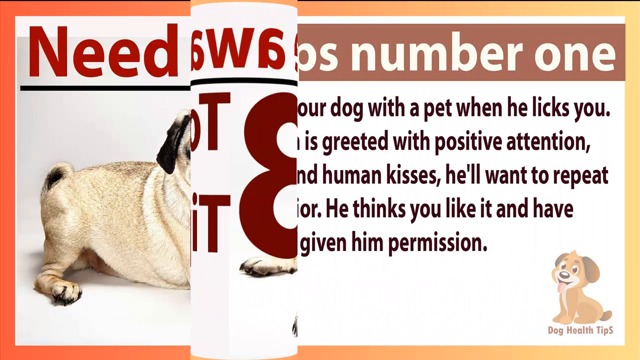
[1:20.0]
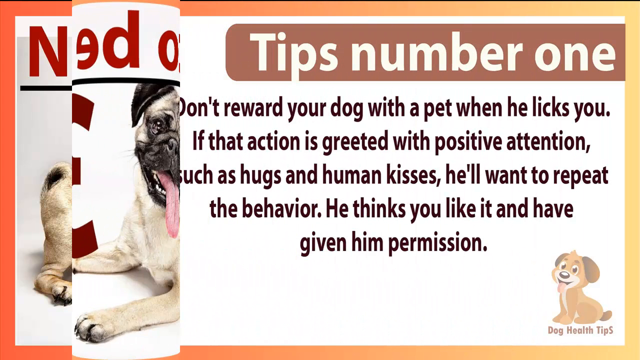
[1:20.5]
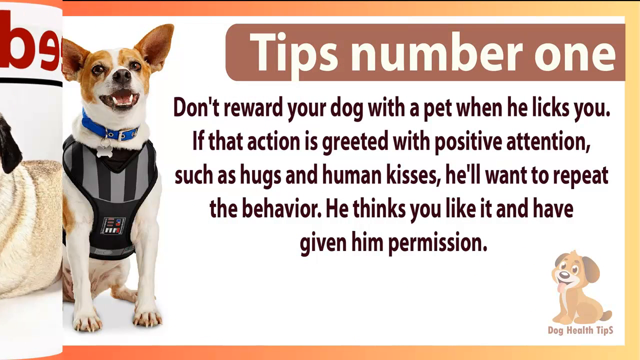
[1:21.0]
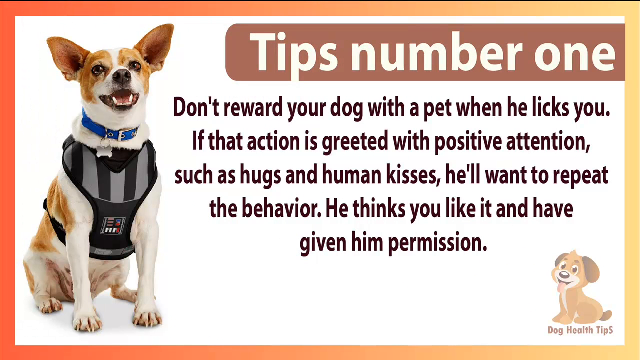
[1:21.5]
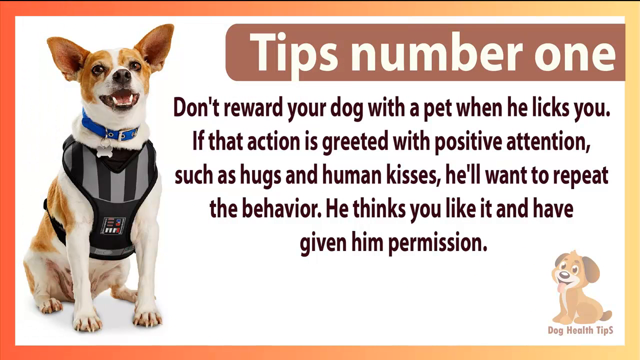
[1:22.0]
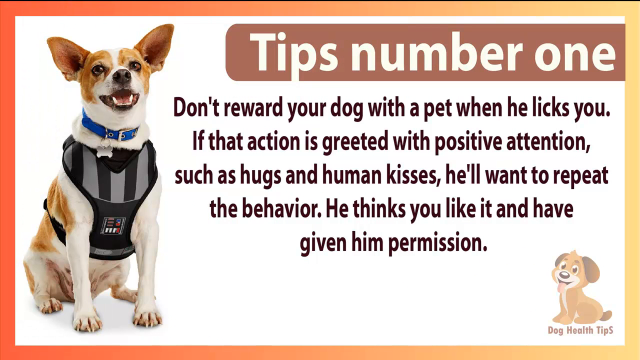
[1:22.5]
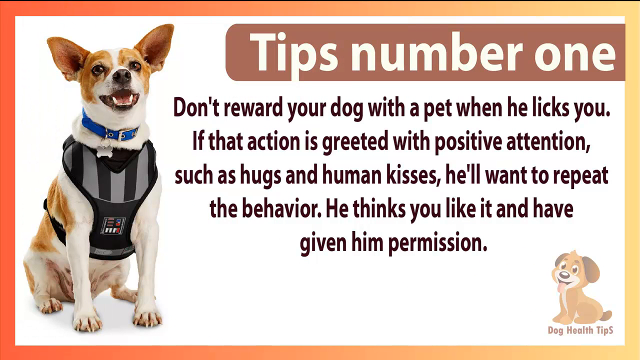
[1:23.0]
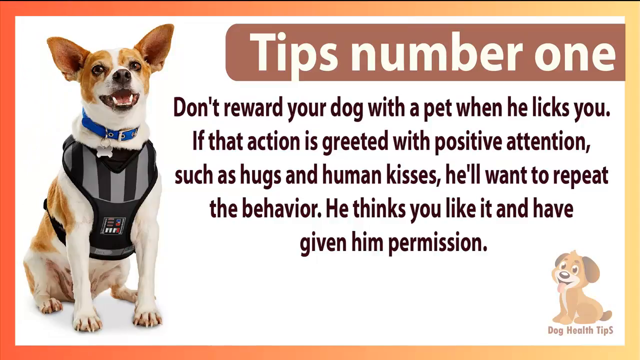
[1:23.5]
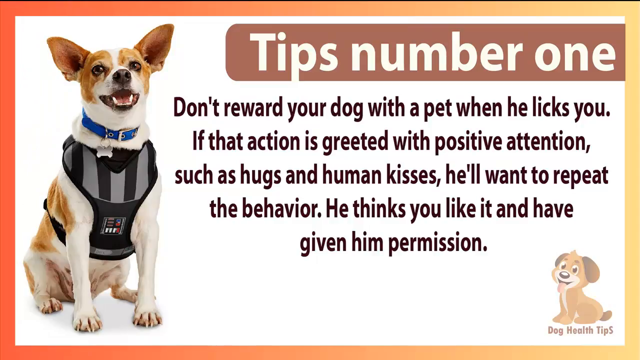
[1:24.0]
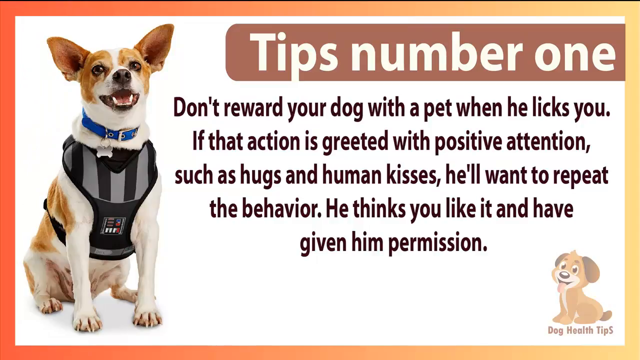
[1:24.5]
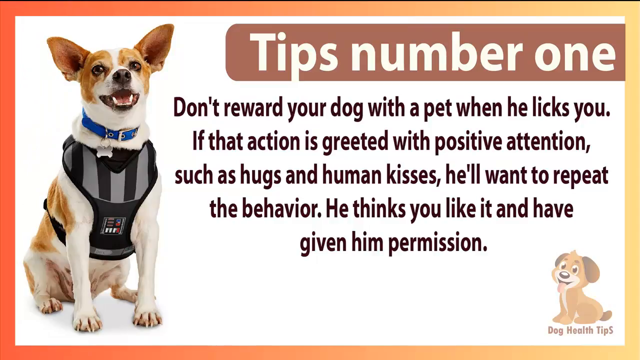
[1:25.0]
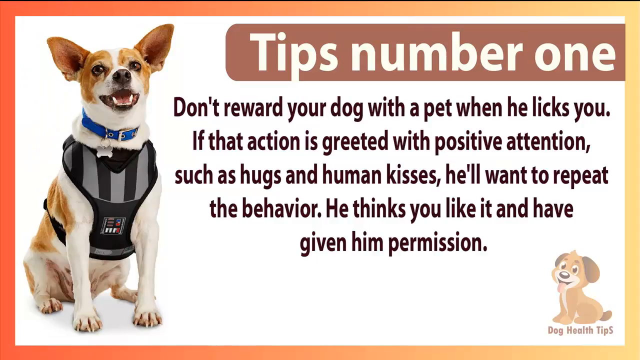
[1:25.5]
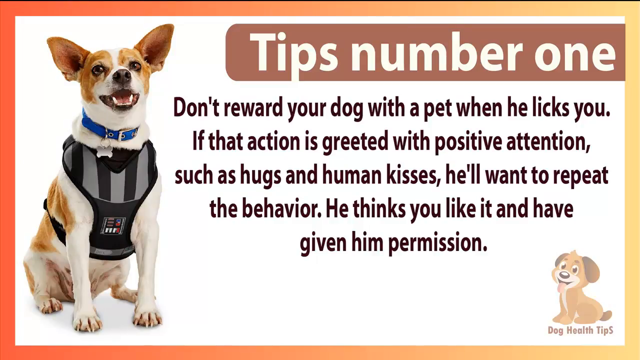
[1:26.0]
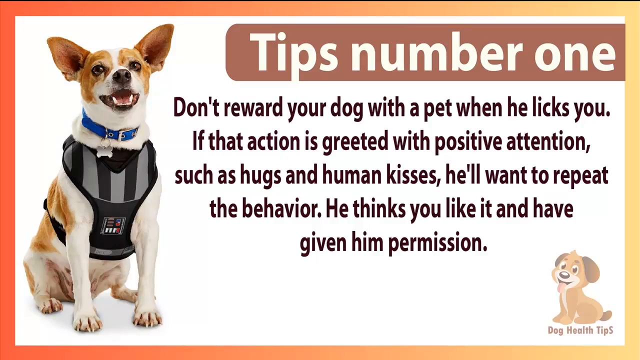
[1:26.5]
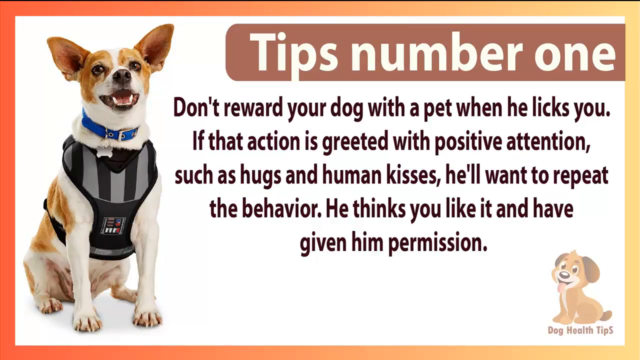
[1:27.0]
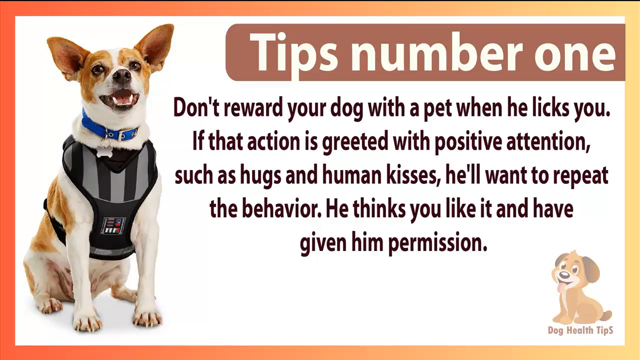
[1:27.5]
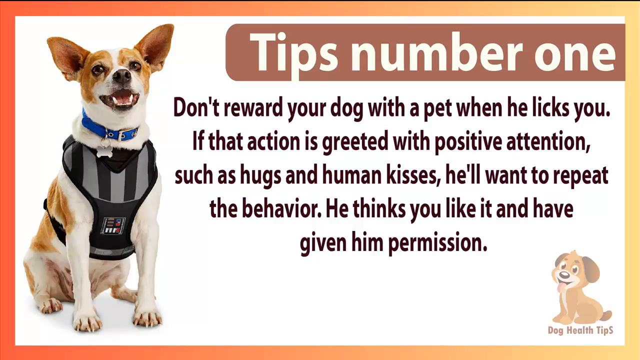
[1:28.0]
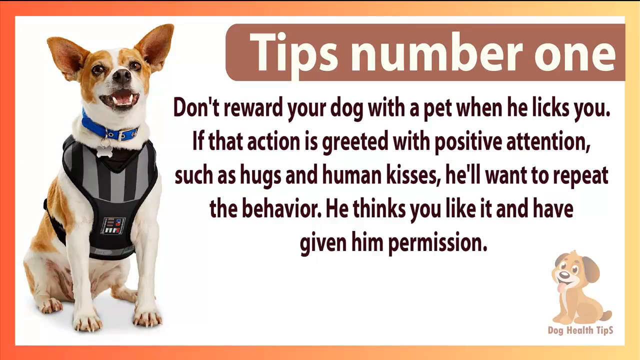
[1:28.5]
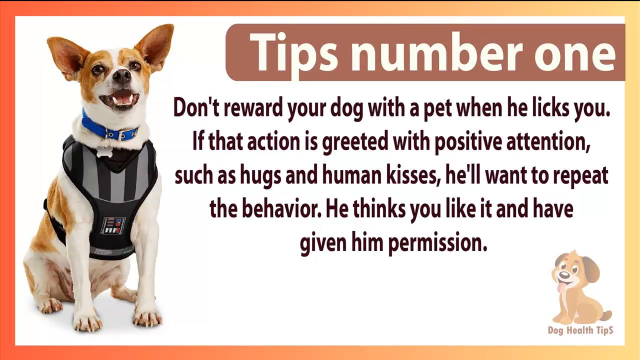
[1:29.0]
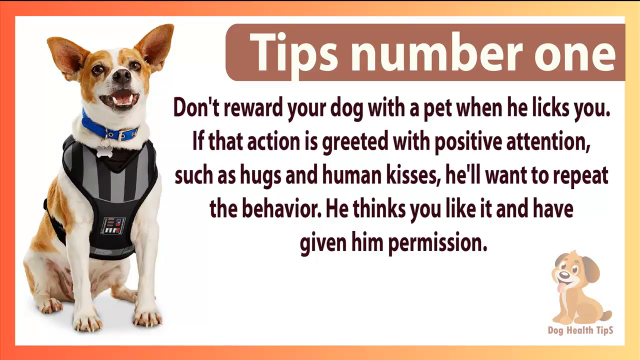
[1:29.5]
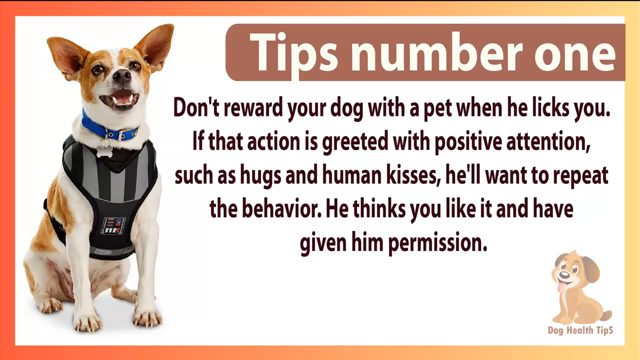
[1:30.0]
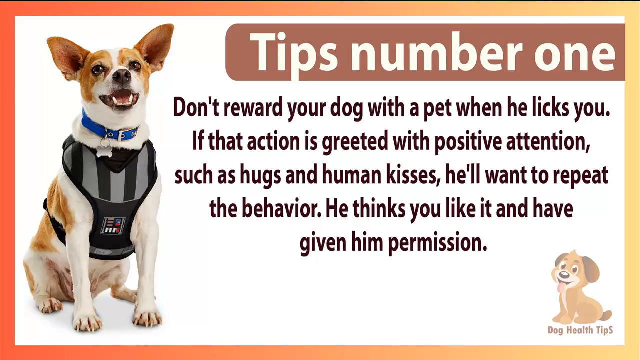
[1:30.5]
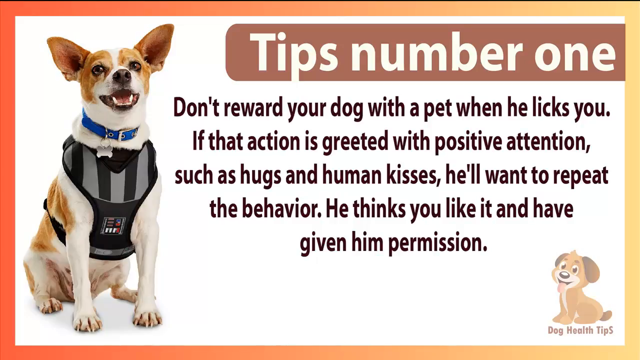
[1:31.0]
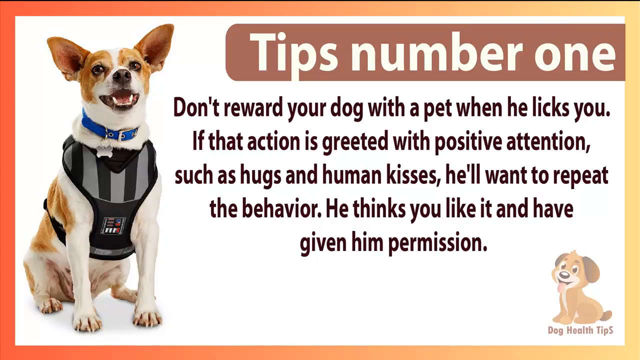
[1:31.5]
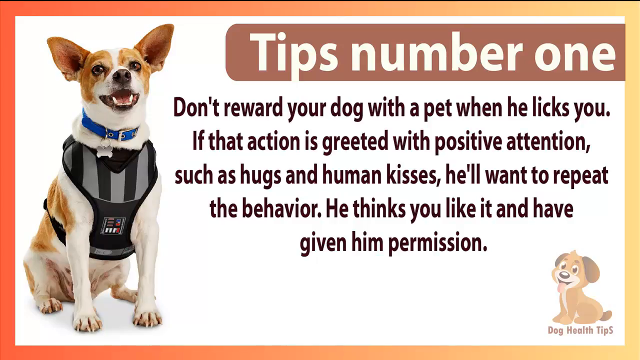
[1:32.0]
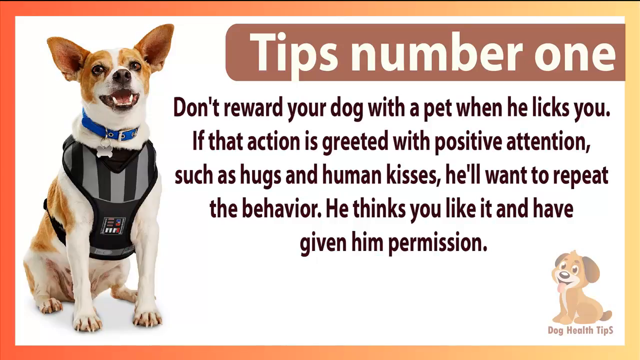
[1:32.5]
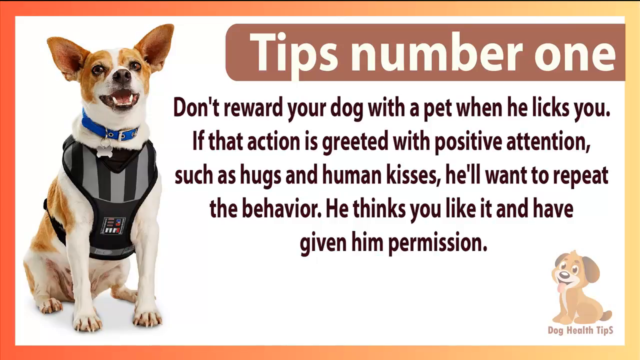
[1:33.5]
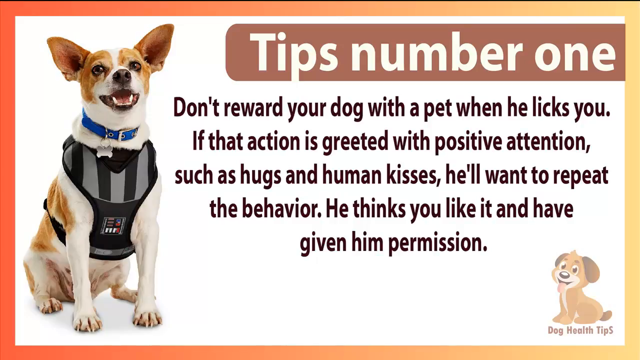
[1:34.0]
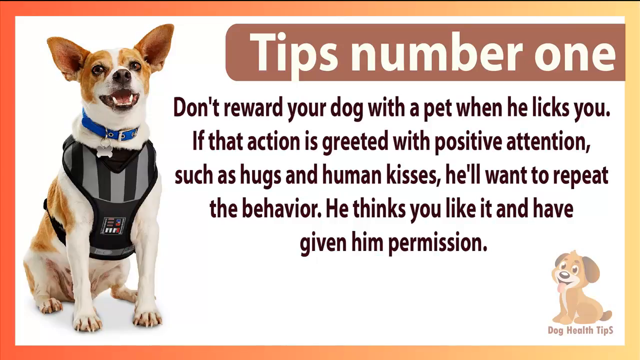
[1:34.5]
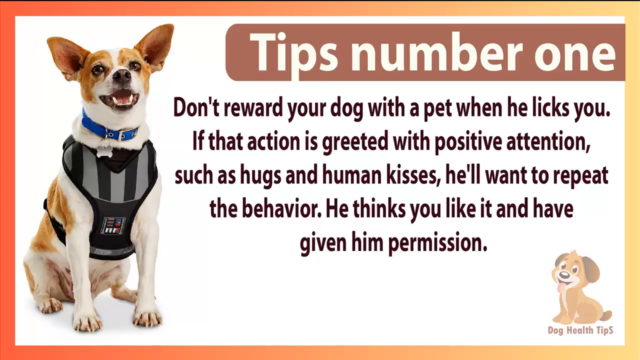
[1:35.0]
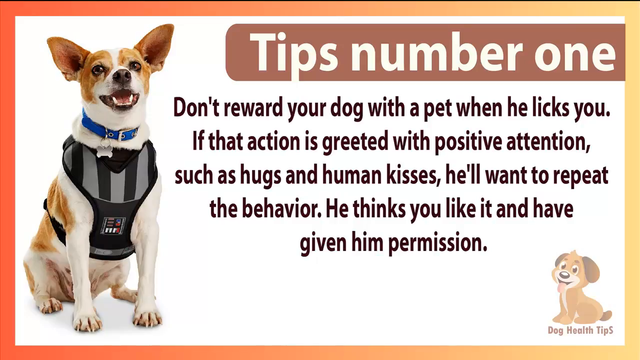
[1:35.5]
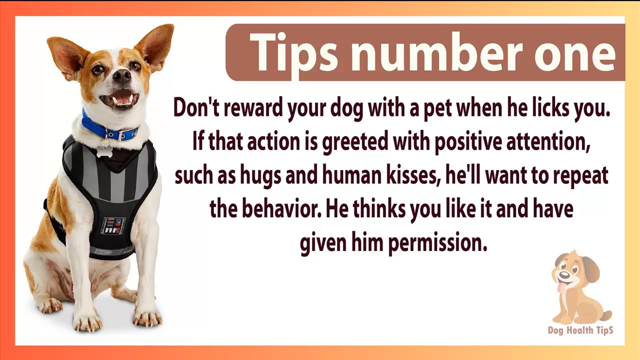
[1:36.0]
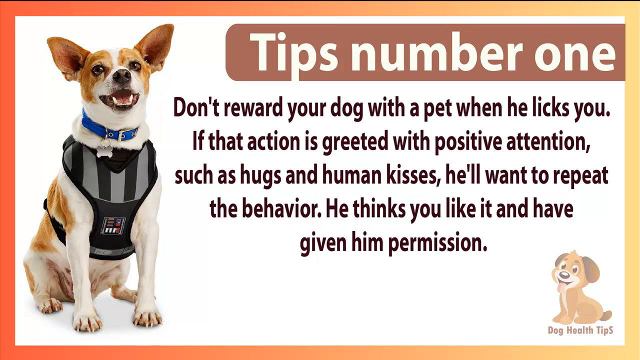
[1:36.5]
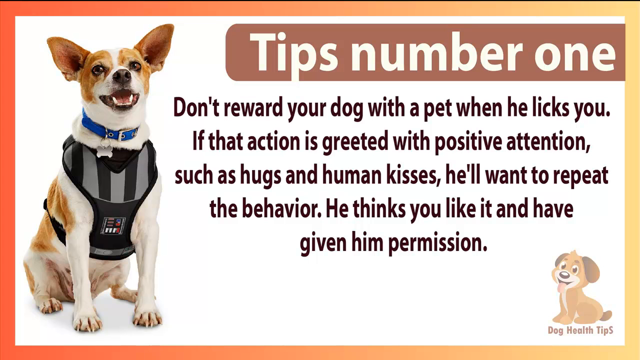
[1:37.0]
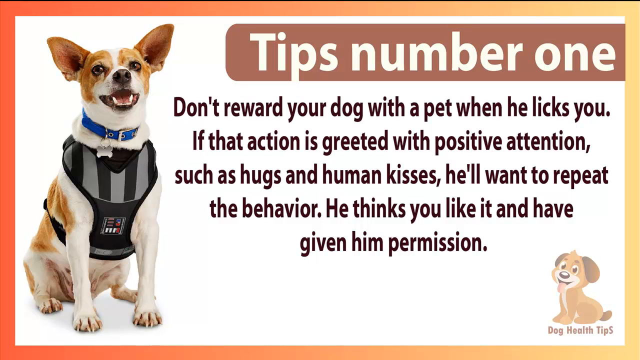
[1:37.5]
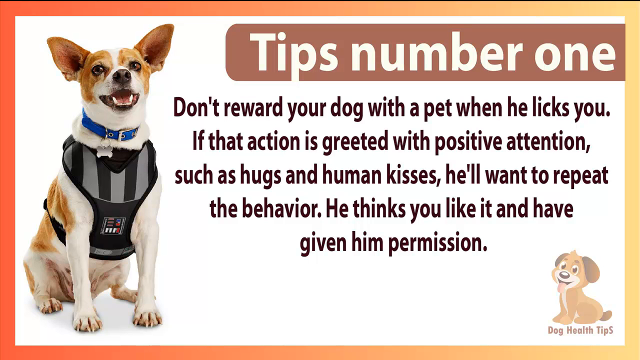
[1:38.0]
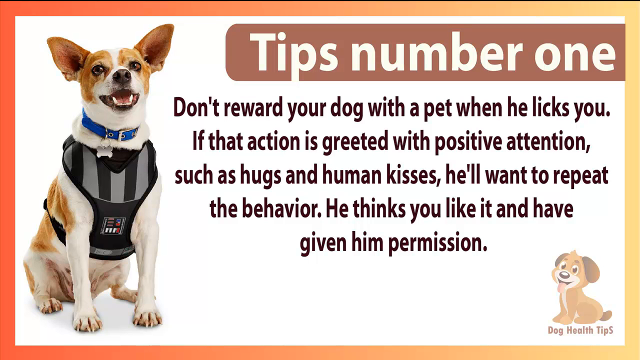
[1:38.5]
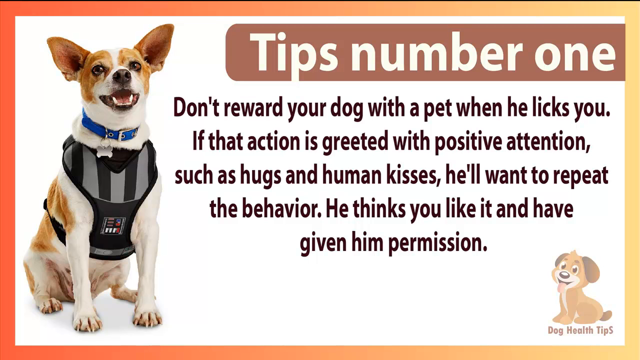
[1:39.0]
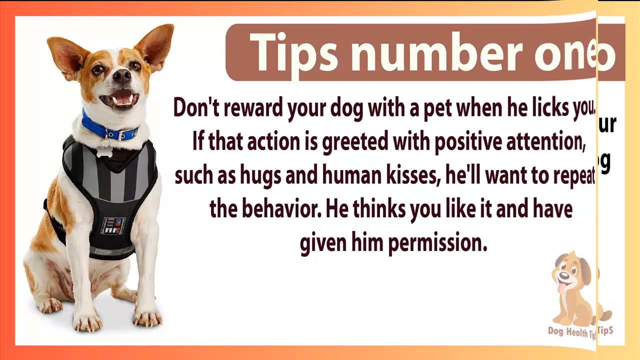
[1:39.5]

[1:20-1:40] The screen rolls to a white background with a picture of a small Jack Russell type dog sitting. The dog wears a striped grey harness and a blue collar with a bone tag. The text reads: "tip number one, don't reward your dog with a pet when he licks you. If that action is greeted with positive attention, such as hugs and human kisses, he'll want to repeat the behaviour. He thinks you like it and have given him permission." The cartoon dog logo is in the bottom right-hand corner. The screen has an ombre border that starts red, turns orange and then yellow. The text is dark burgundy, while the top part reading "tips number one" is in white on a light brown border.